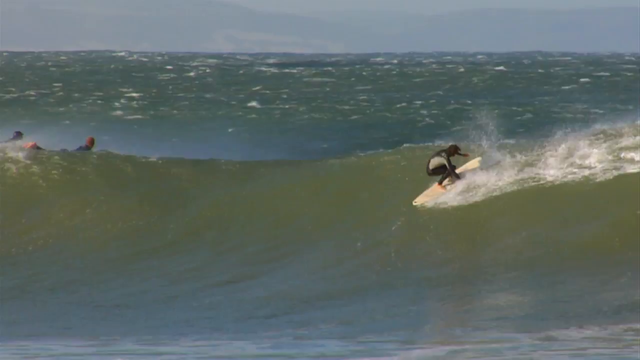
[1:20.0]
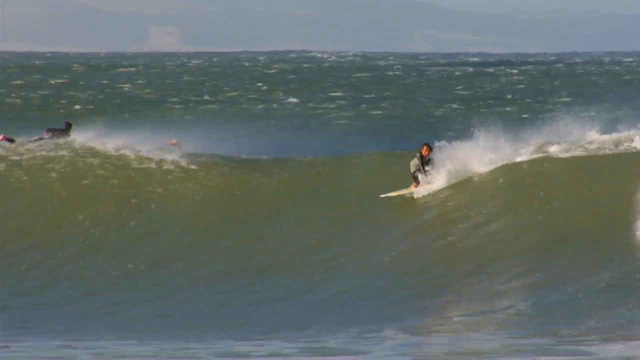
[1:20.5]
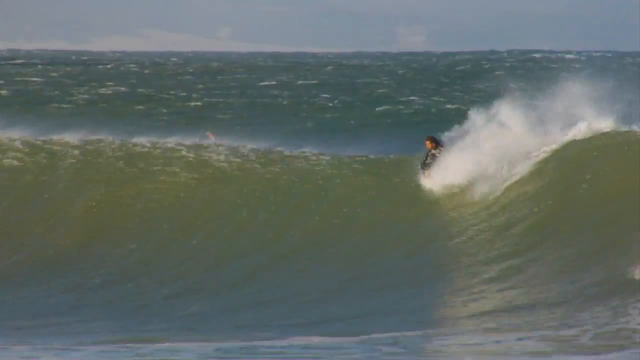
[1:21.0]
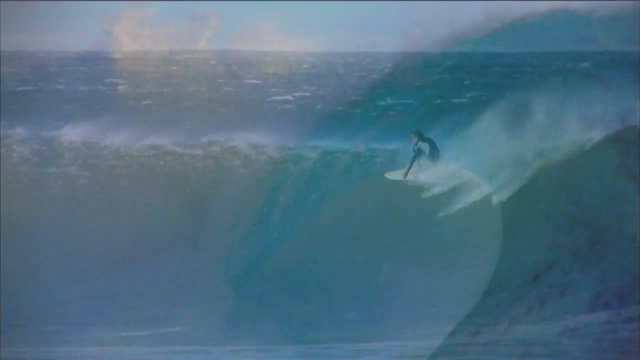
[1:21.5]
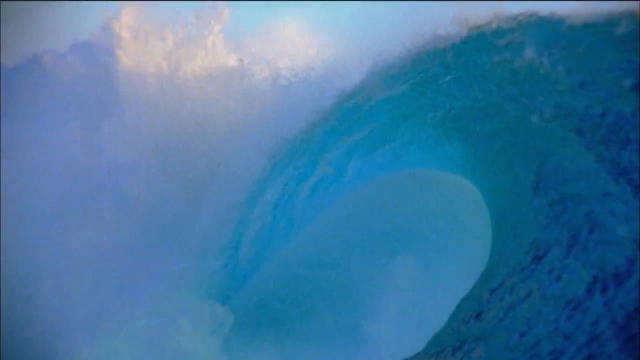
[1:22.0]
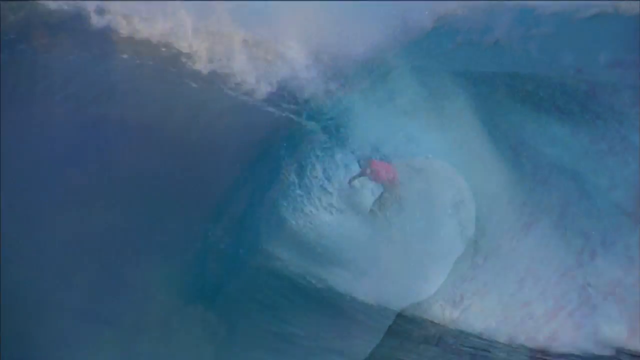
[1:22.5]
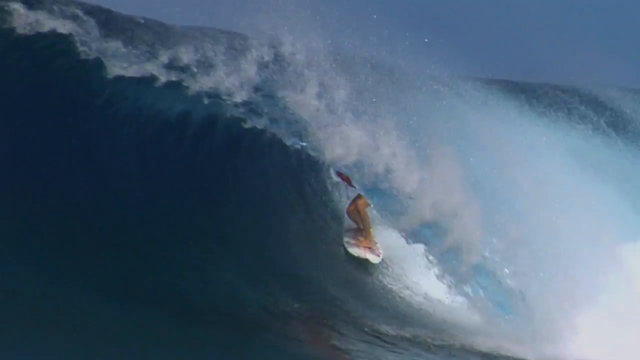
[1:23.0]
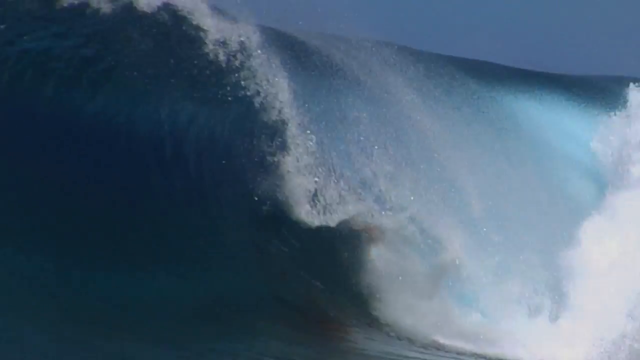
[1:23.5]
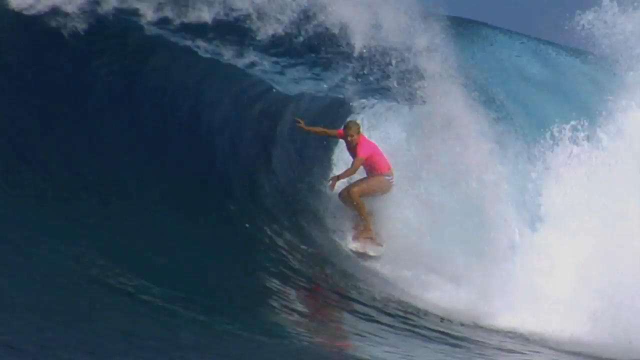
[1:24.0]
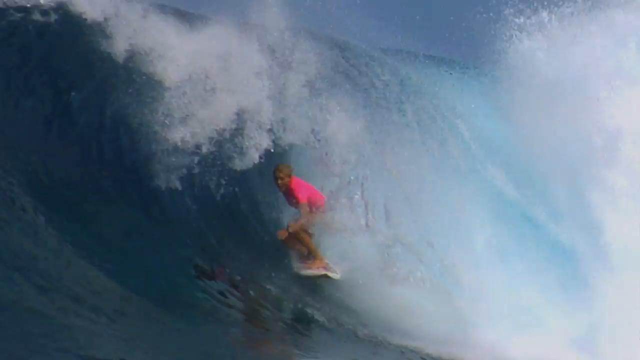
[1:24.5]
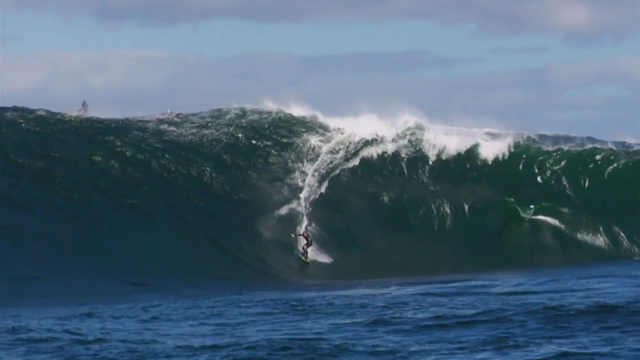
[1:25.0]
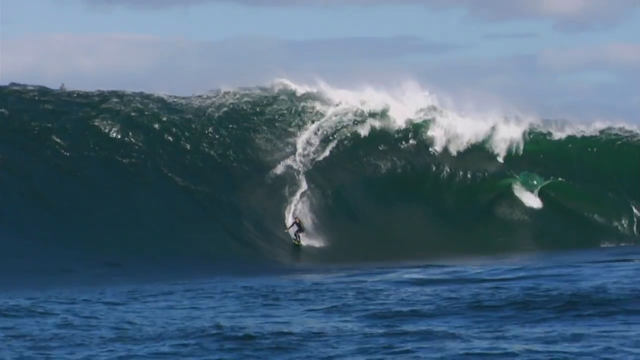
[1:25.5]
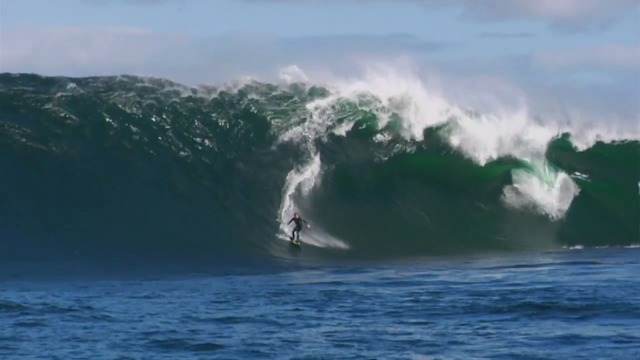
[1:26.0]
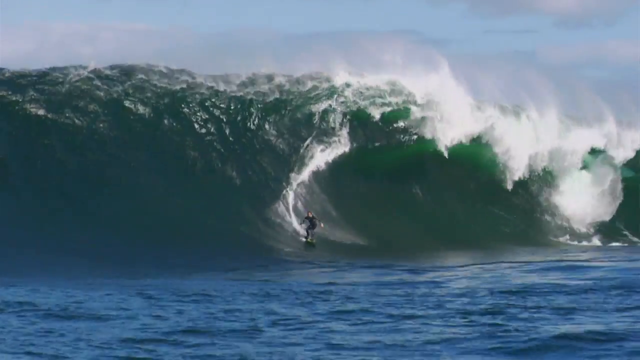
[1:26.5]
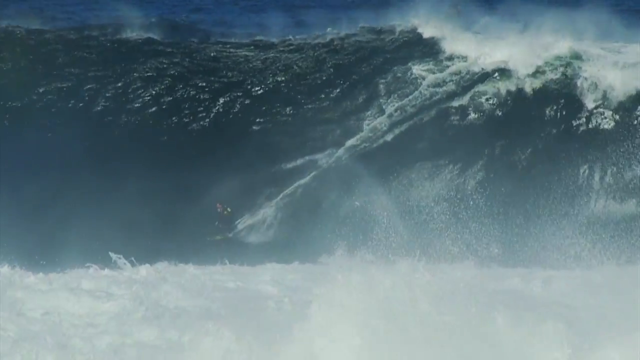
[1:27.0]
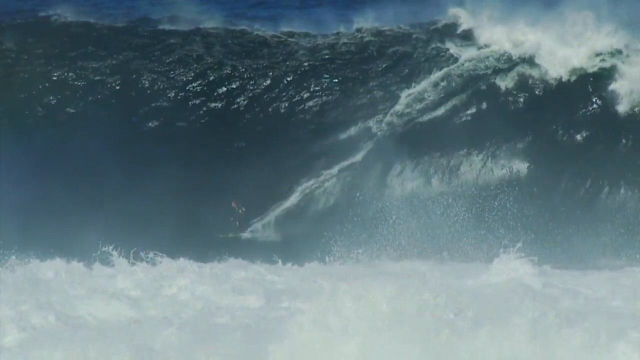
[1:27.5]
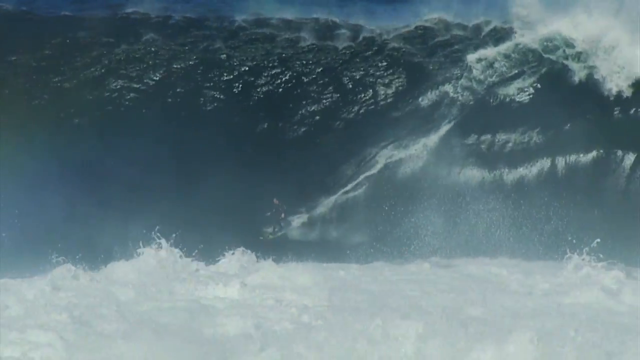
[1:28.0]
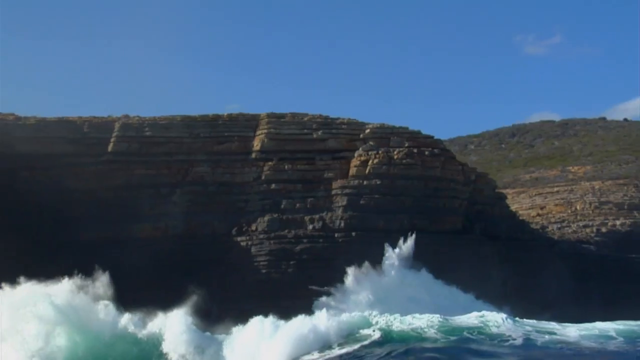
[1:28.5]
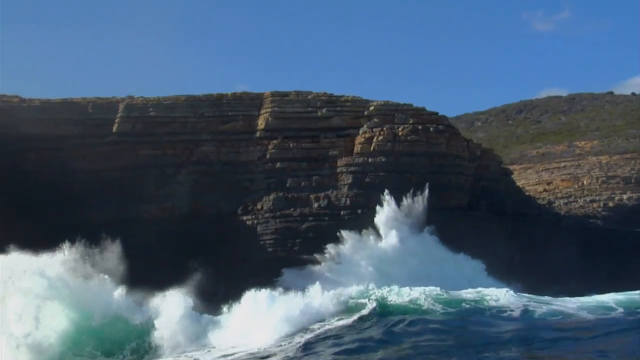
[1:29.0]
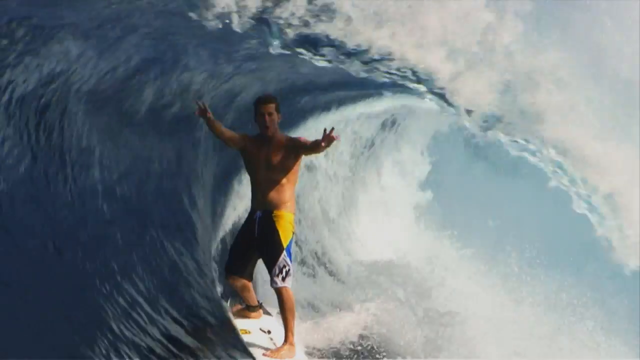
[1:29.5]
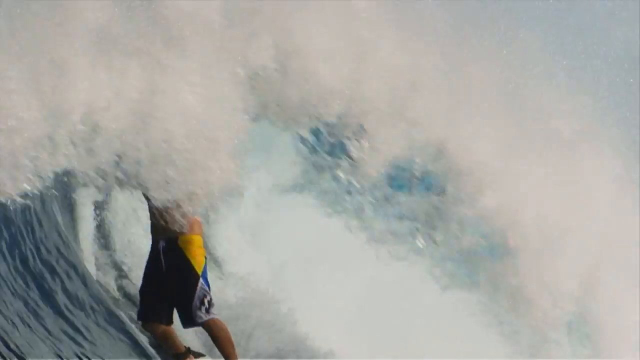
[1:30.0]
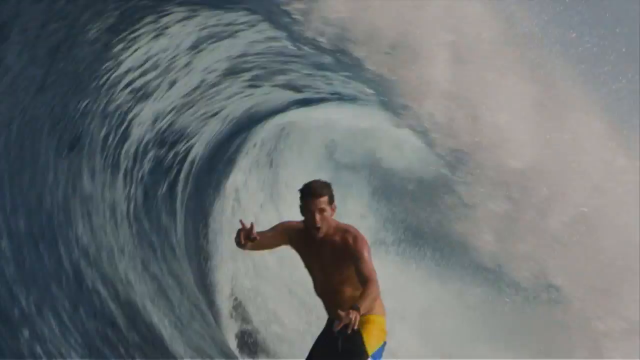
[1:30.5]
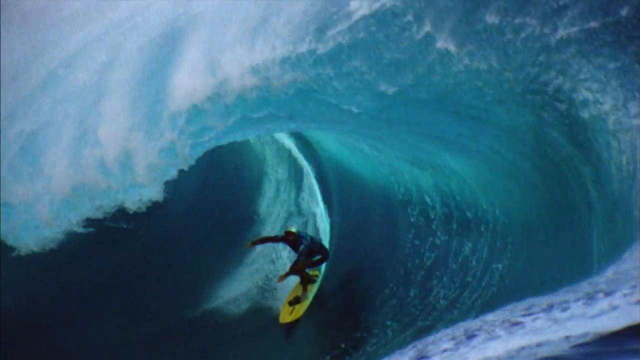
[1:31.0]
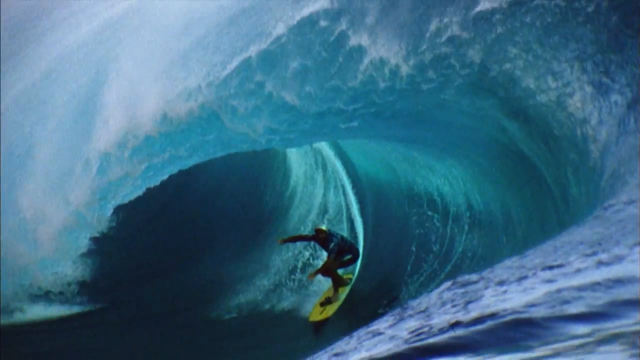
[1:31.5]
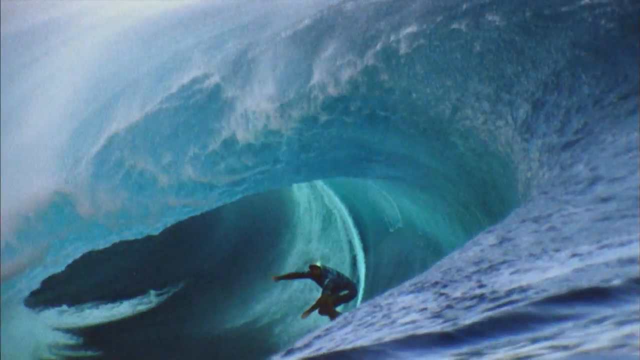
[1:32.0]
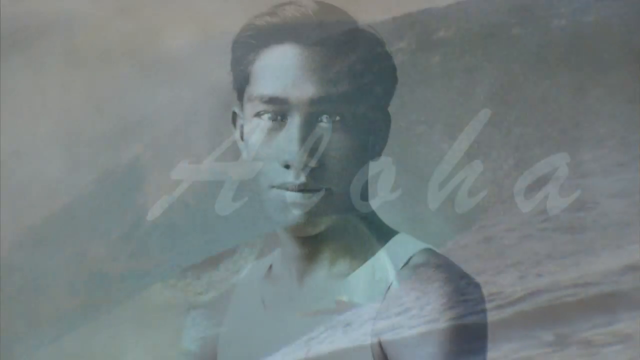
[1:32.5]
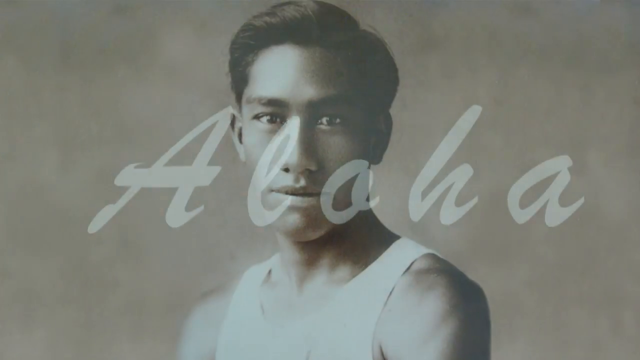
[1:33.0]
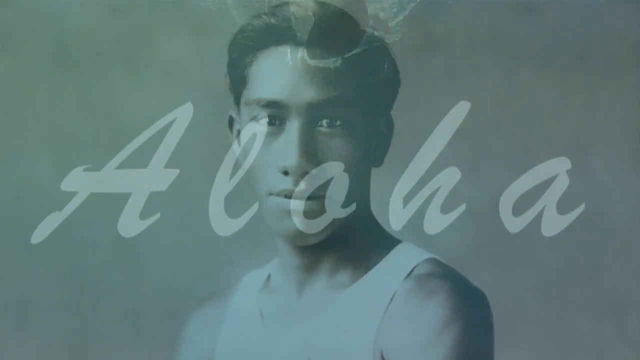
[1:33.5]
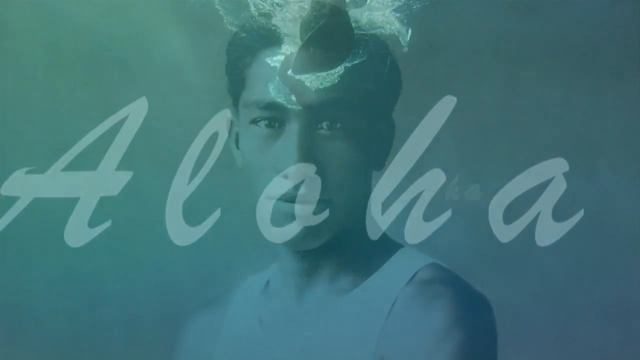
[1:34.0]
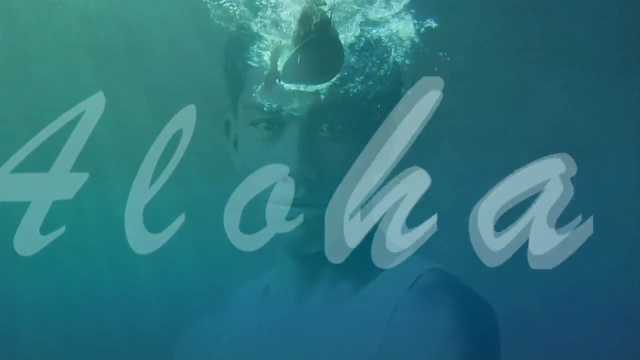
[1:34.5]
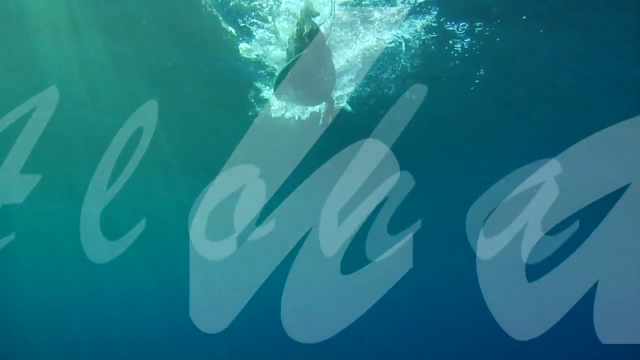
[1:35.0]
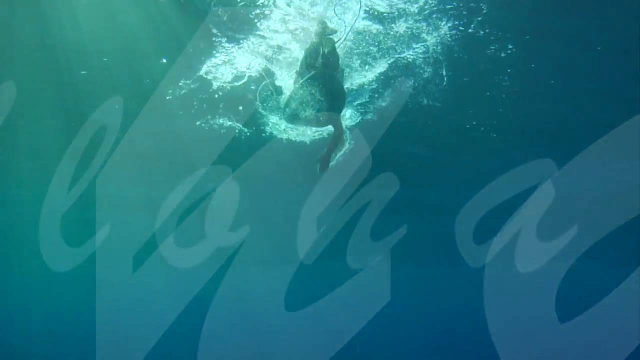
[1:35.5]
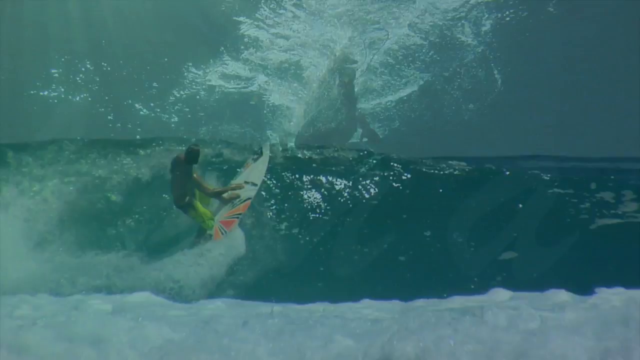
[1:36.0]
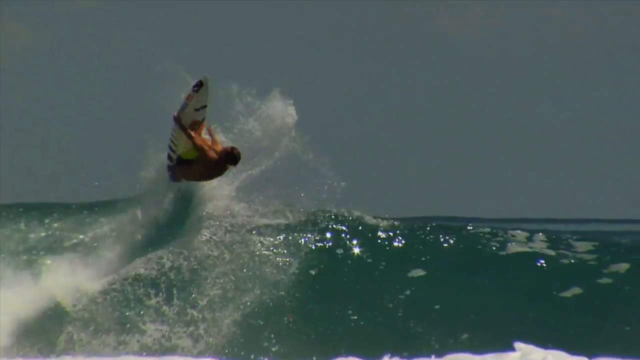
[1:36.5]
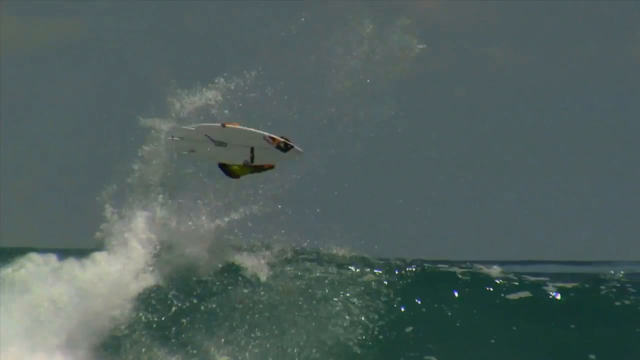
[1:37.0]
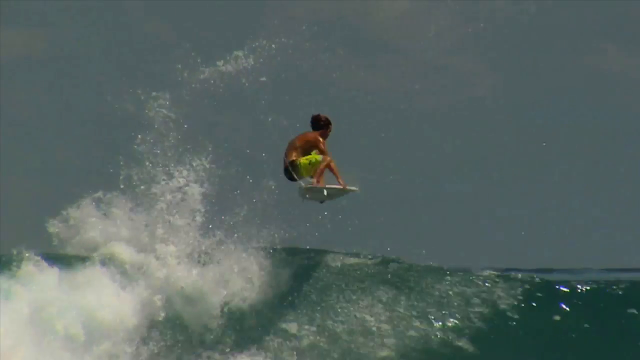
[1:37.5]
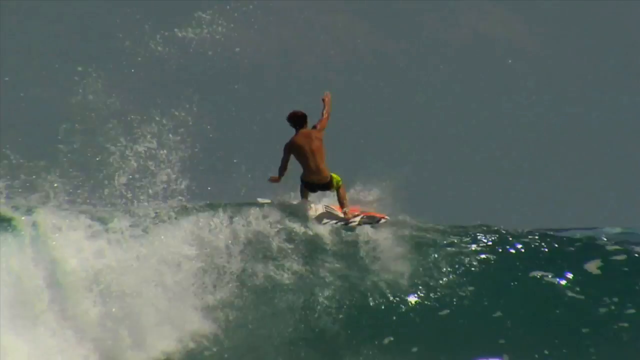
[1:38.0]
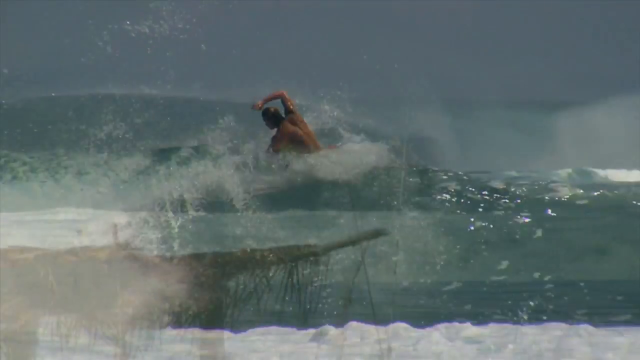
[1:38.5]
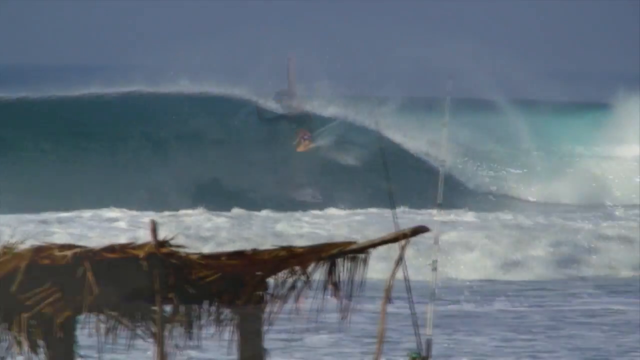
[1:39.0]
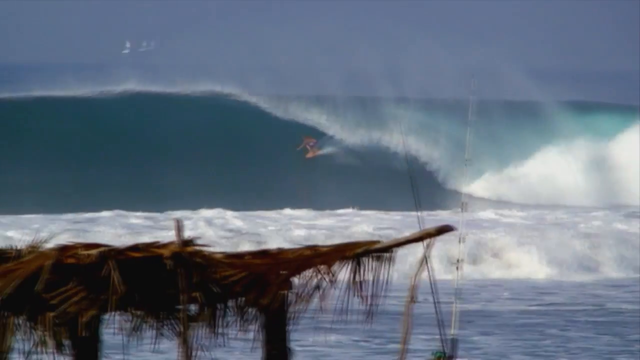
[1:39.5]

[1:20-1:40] Waves crash, and a person in a pink shirt surfs. Some of the waves are very high, 10 meters plus. Waves crash into rock that appears to be sedimentary, layered on top of itself, making a cloudy white foam. A man goes through the tunnel the wave makes as it crashes over, holding his fingers out in a peace sign inside the tunnel. An image of a man appears with the word "aloha" flashing on the screen. A man in yellow shorts comes out of the wave, spins in the air and lands back on the wave.